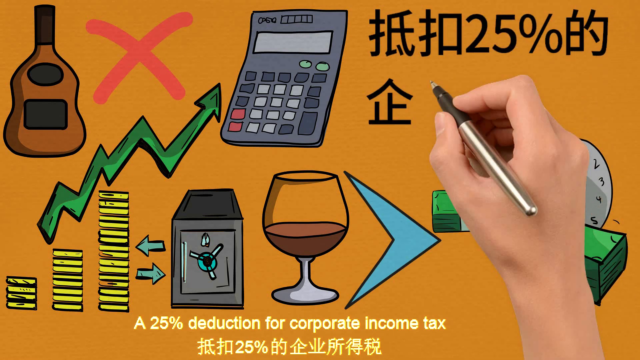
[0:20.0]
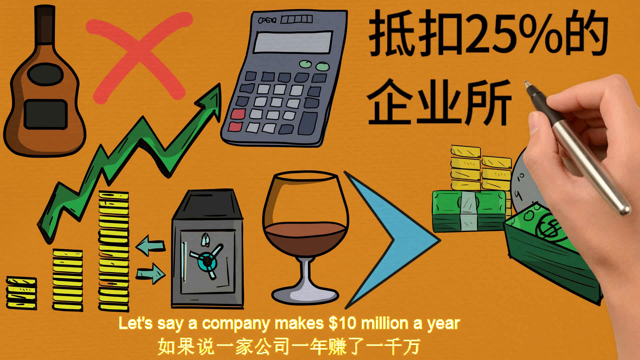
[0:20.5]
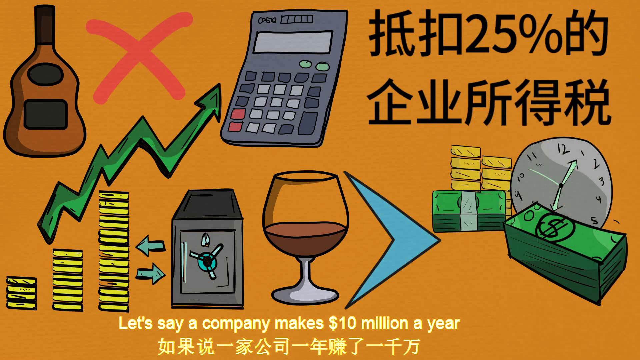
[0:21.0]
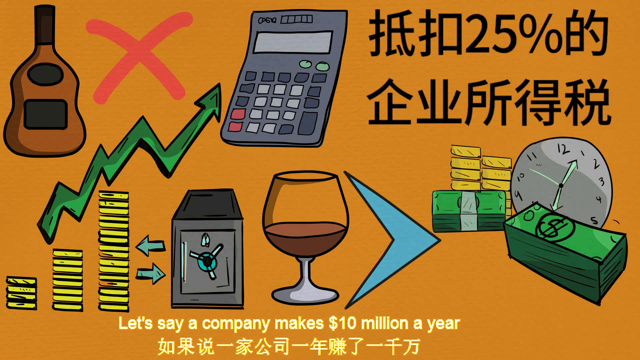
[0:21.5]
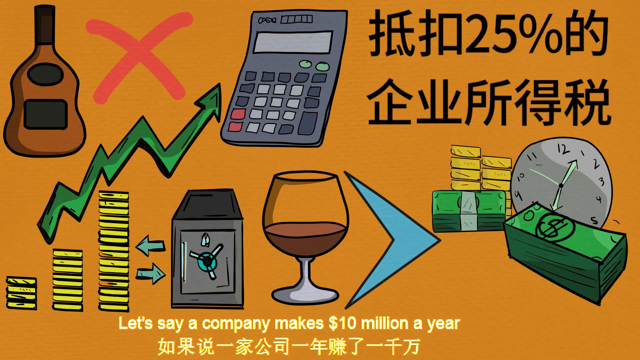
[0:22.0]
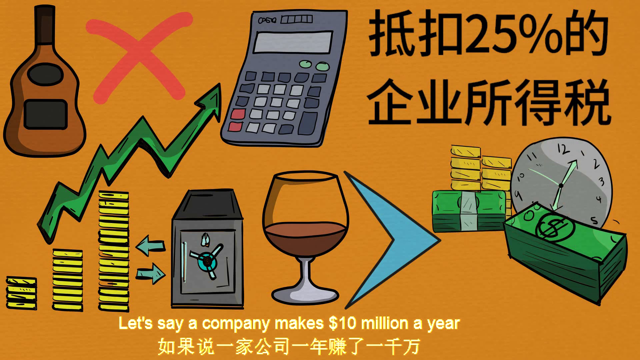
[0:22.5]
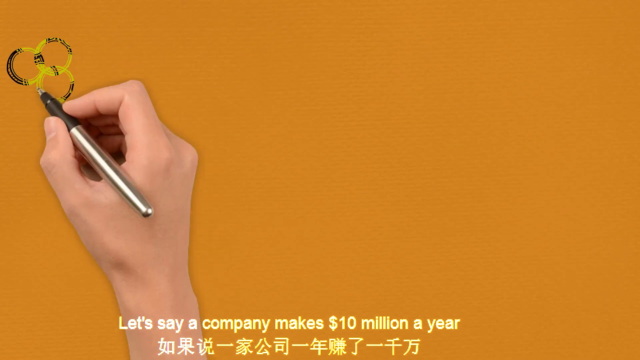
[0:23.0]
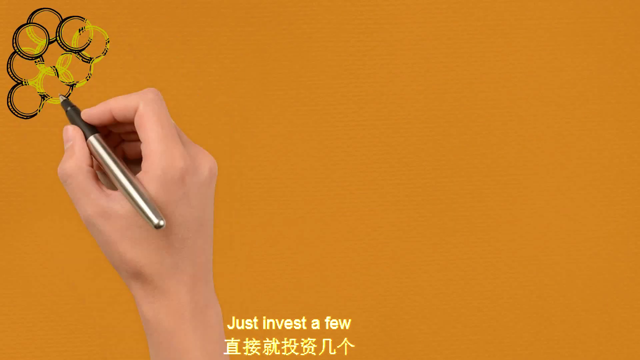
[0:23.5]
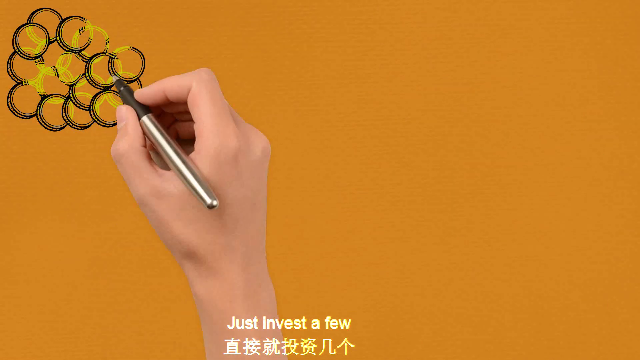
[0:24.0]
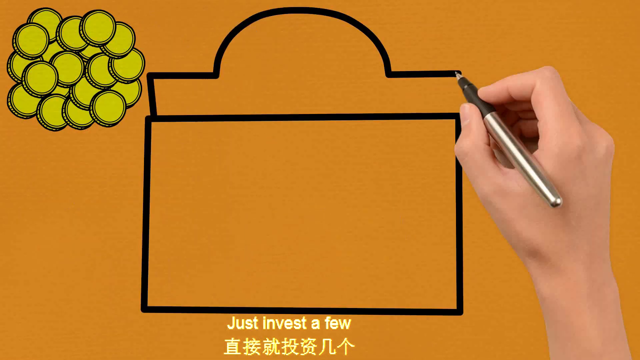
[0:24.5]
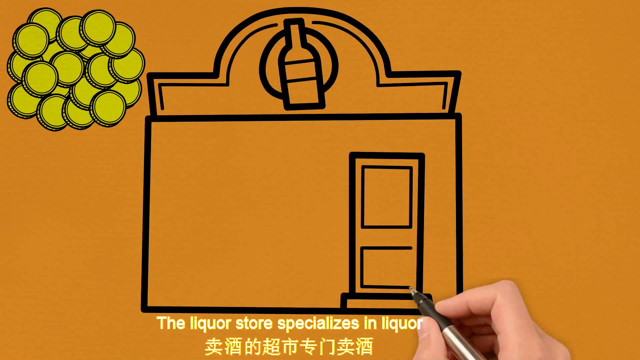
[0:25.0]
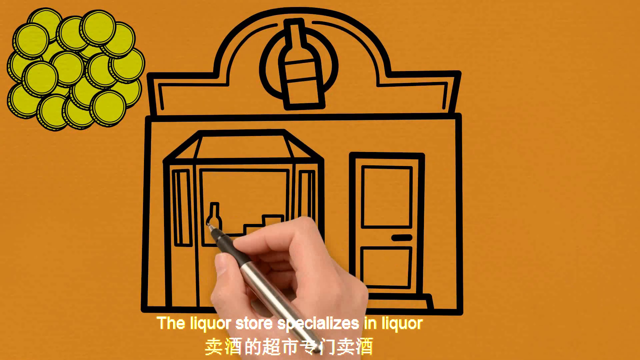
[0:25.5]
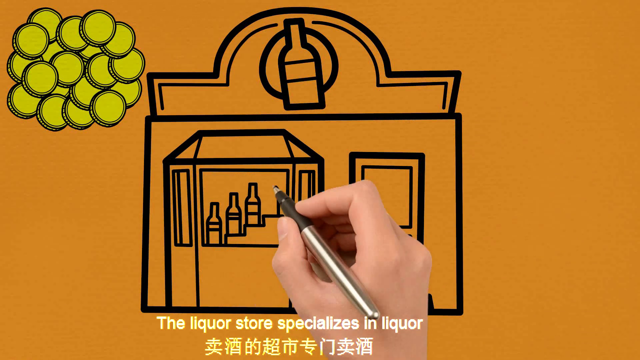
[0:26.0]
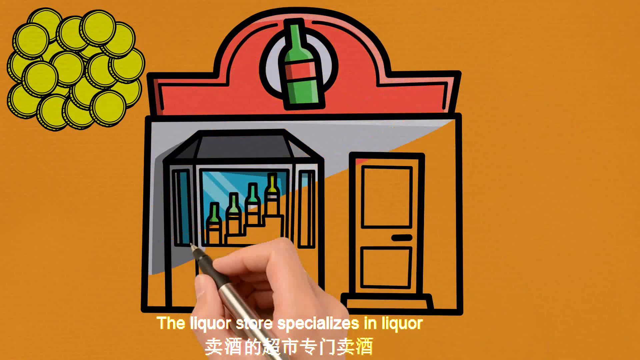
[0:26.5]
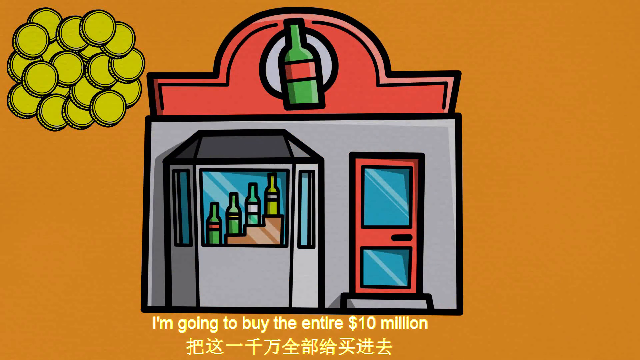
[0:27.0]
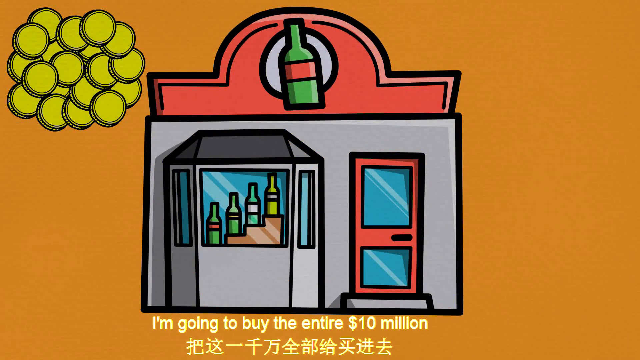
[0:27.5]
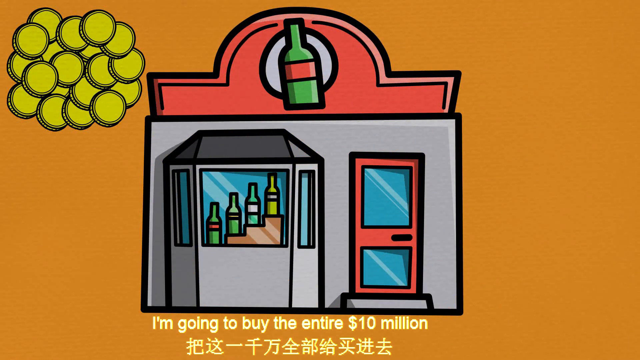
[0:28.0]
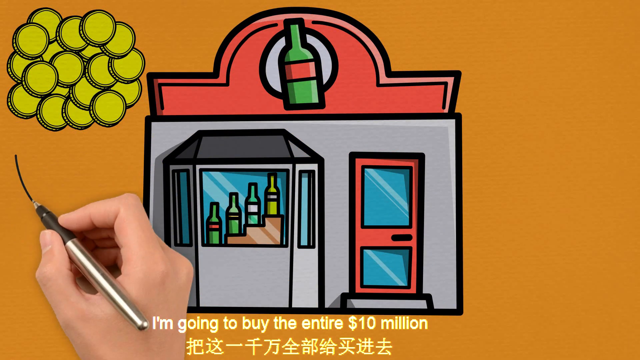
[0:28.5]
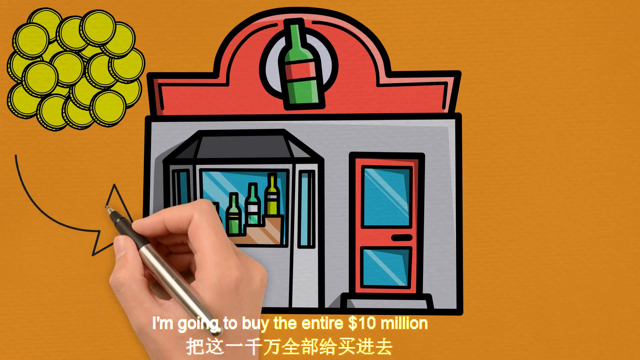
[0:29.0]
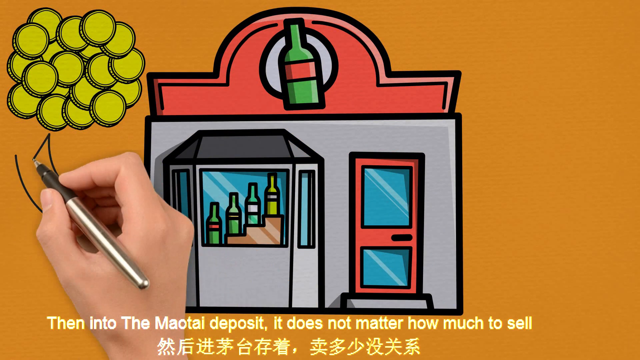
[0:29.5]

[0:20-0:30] Someone with a marker is drawing on an orange screen that already holds a bottle, an axe, a calculator, some arrows, some gold bars, a safe with arrows pointing towards and away from the gold bars, a glass of wine, a blue arrow pointing to the right, stacks of money, stacks of gold and a clock, and they now add some Japanese writing. The scene shifts to a drawing of some kind of store with a bottle on top and gold coins in the upper left corner. White text at the bottom reads "the liquor store specializes in liquor," with Japanese writing underneath. The person keeps drawing as the text reads "I'm going to buy something" and then mentions "the mutai deposit" and that "it does not matter how a company uses the mutai." The text is about an item called mutai and why rich people invest in it, explained through the drawing. The text reads "the liquor store specializes in liquor" and "I'm going to buy the entire 10 million dollars," then an arrow is drawn and the drawing stops.